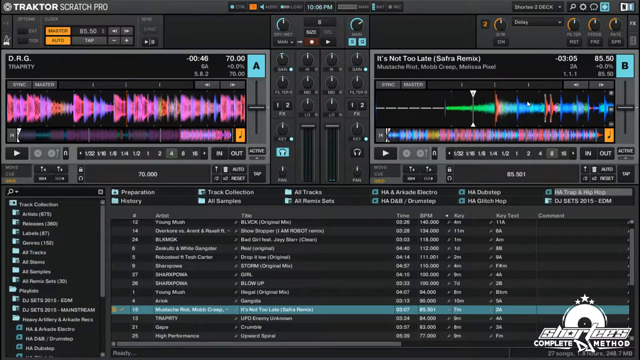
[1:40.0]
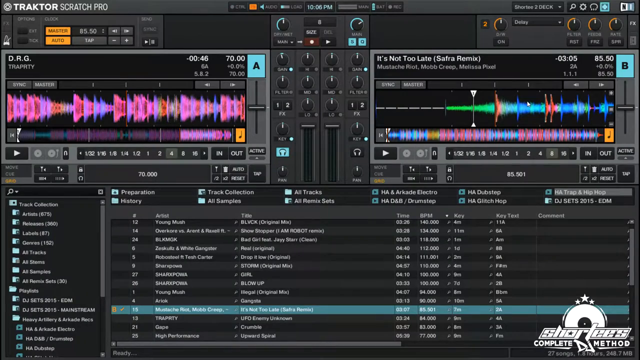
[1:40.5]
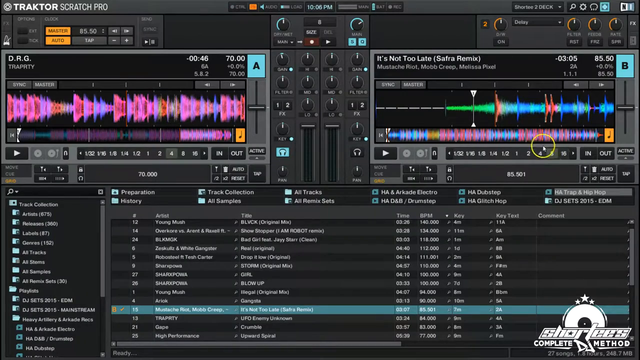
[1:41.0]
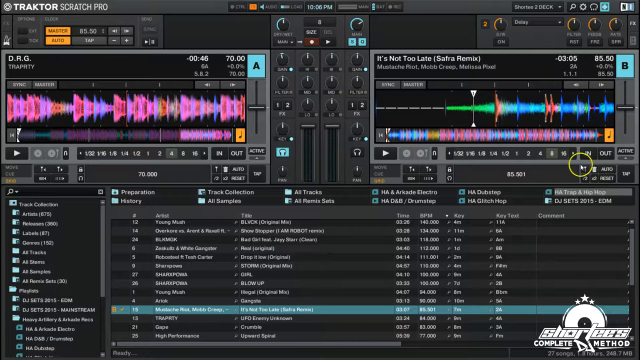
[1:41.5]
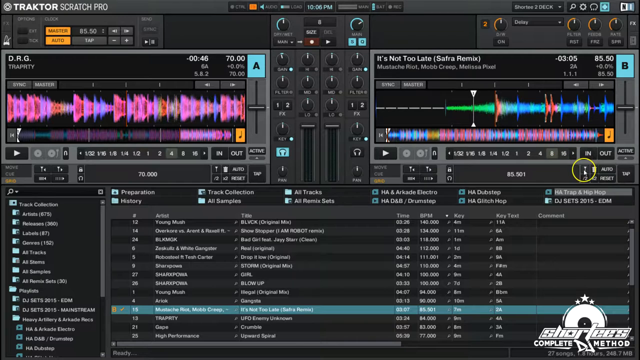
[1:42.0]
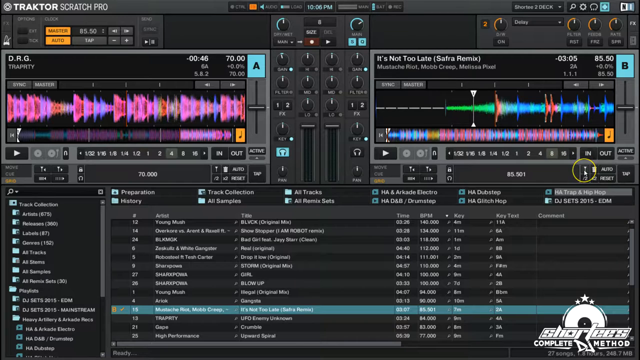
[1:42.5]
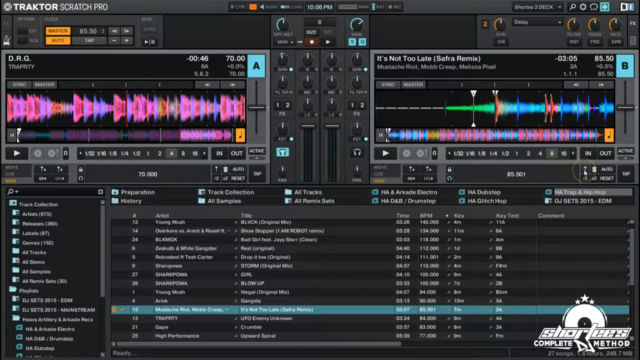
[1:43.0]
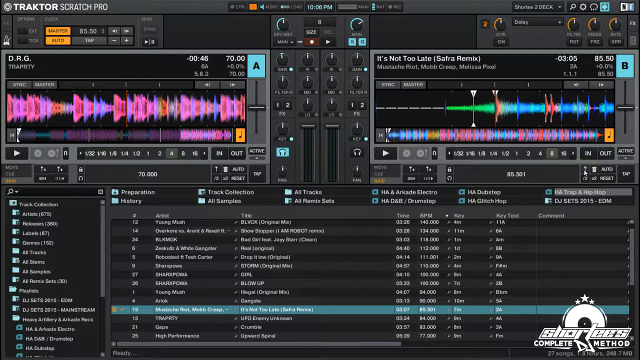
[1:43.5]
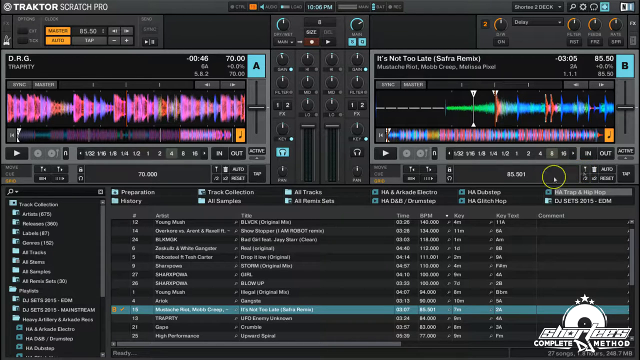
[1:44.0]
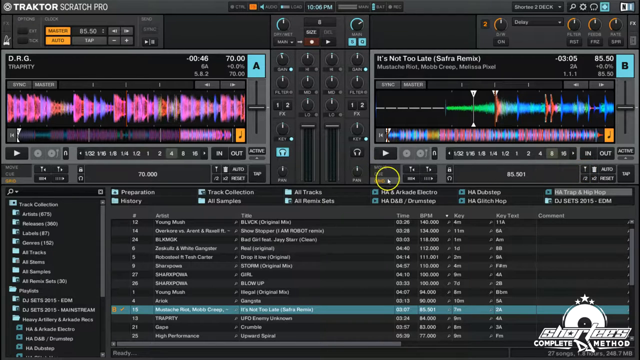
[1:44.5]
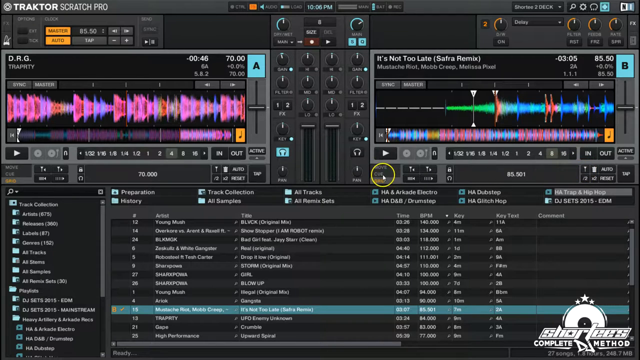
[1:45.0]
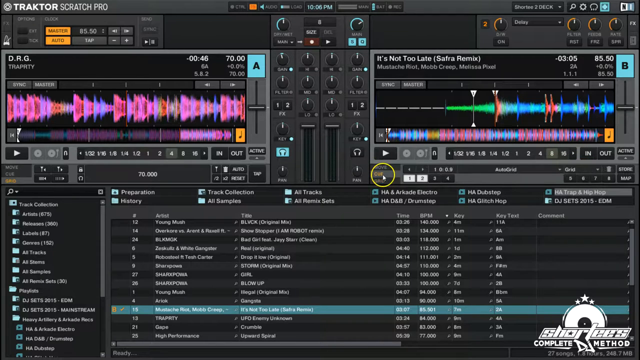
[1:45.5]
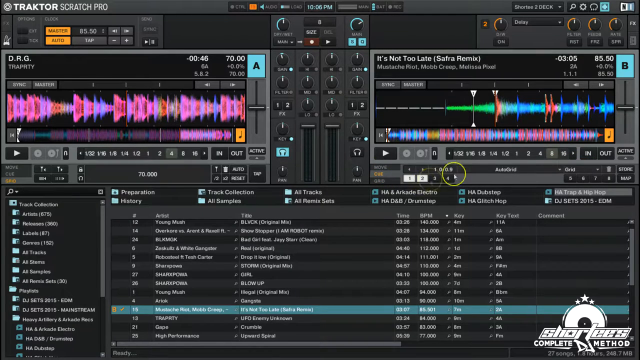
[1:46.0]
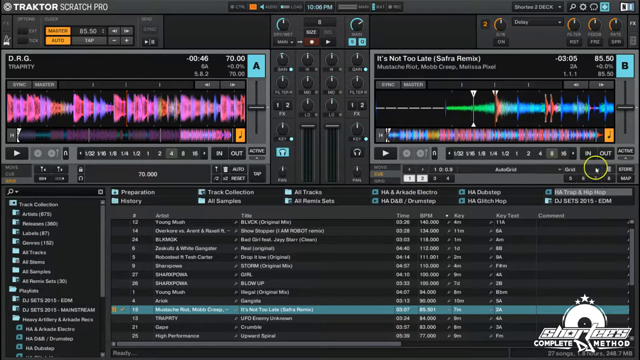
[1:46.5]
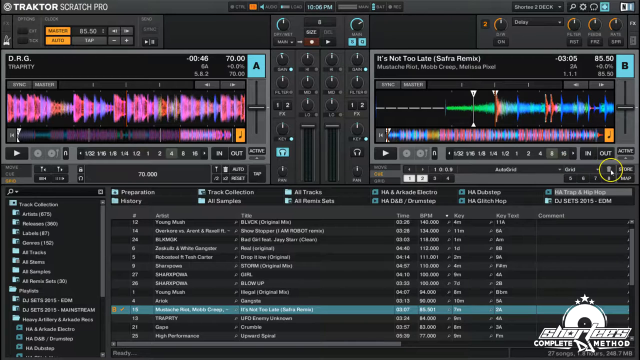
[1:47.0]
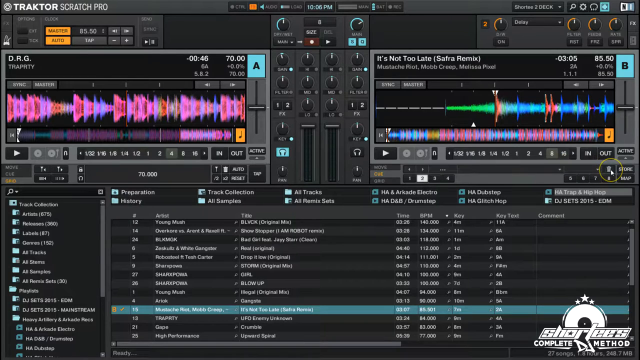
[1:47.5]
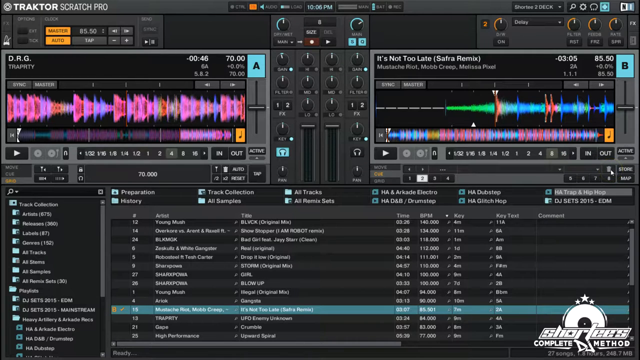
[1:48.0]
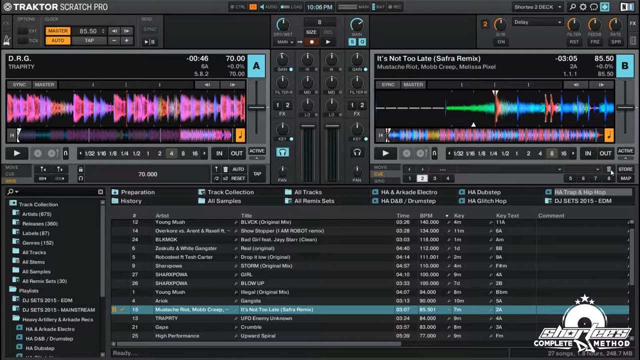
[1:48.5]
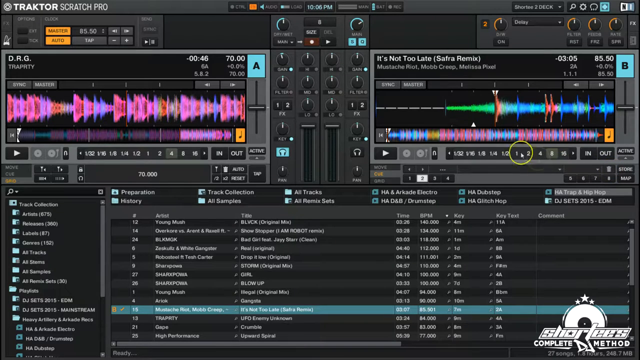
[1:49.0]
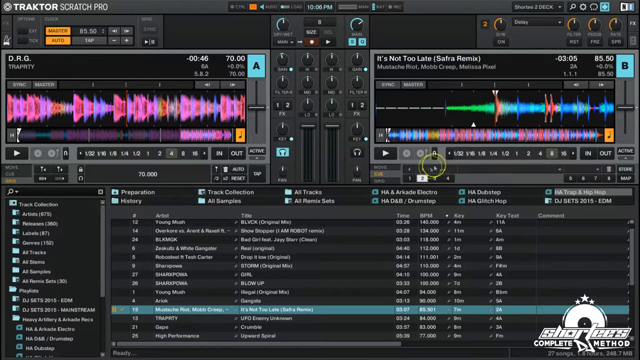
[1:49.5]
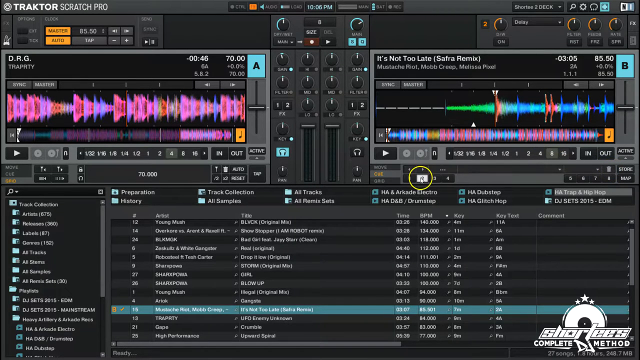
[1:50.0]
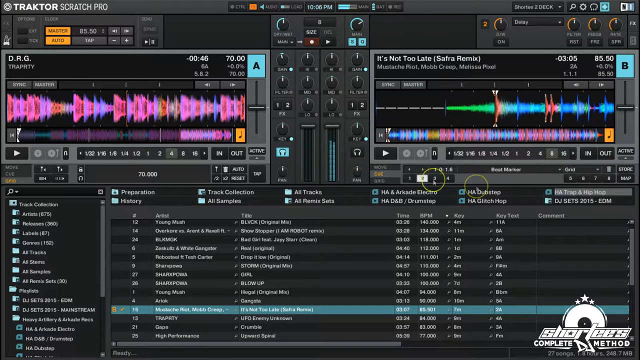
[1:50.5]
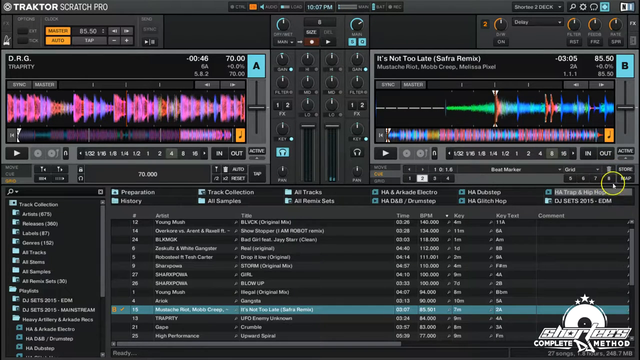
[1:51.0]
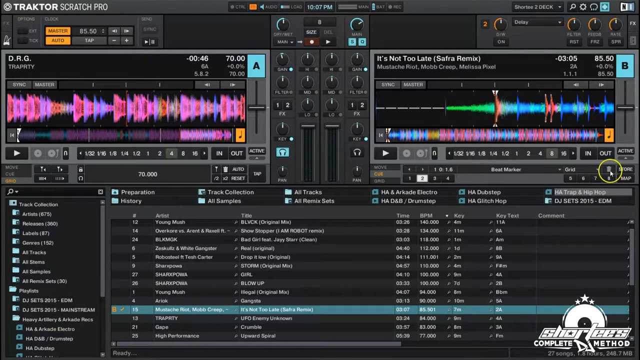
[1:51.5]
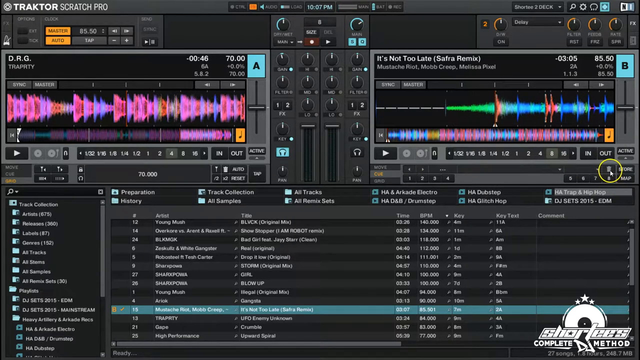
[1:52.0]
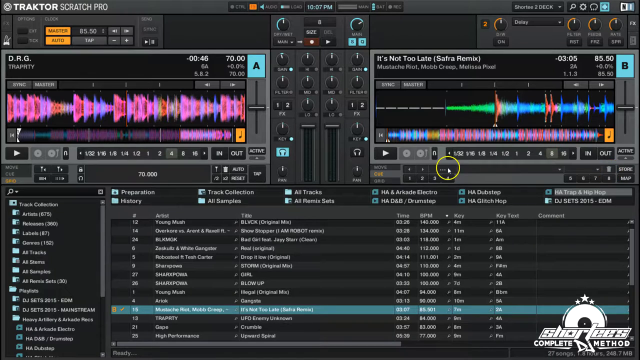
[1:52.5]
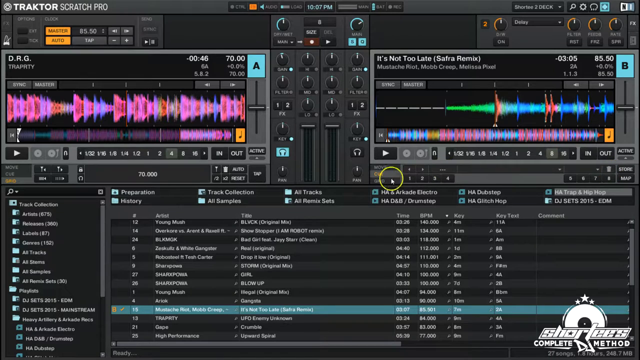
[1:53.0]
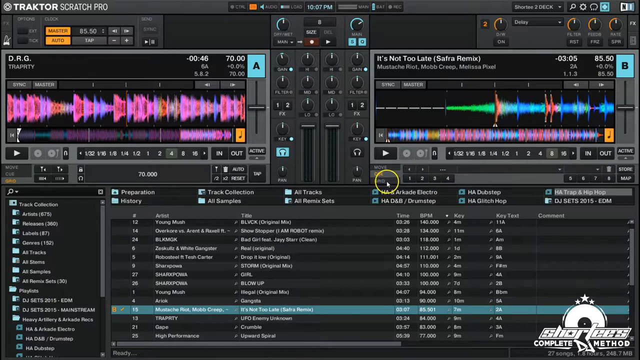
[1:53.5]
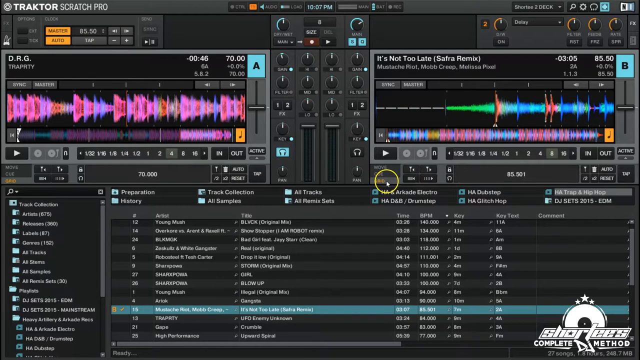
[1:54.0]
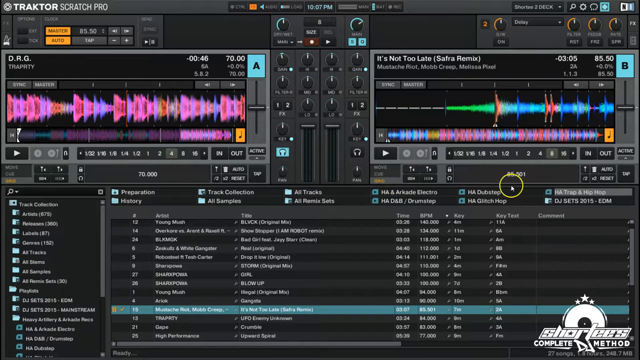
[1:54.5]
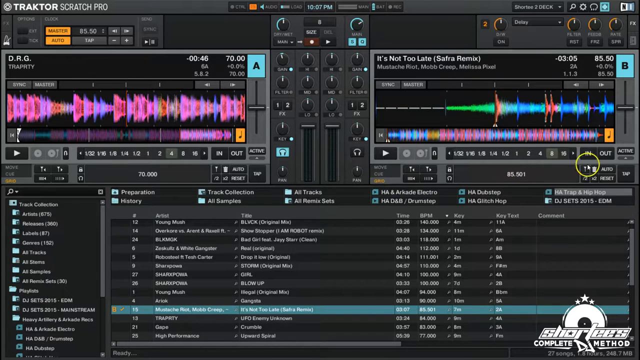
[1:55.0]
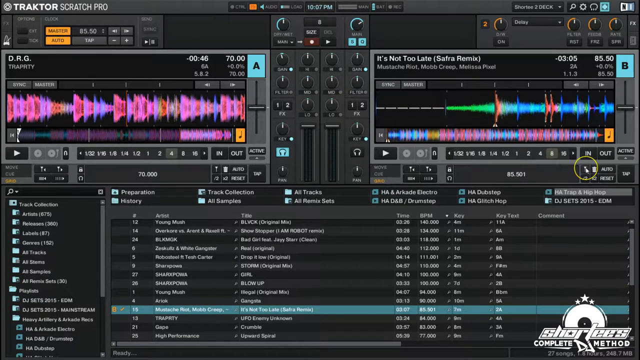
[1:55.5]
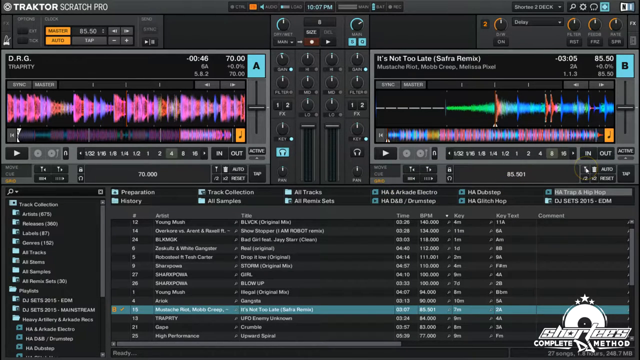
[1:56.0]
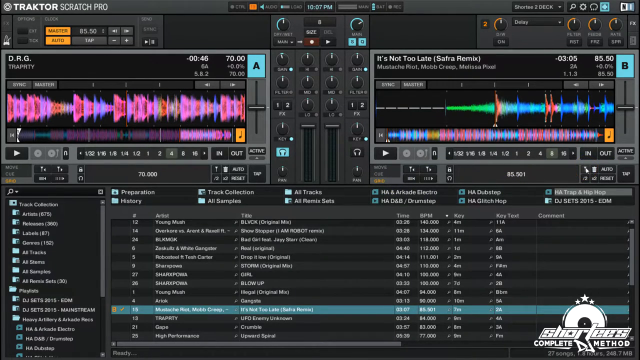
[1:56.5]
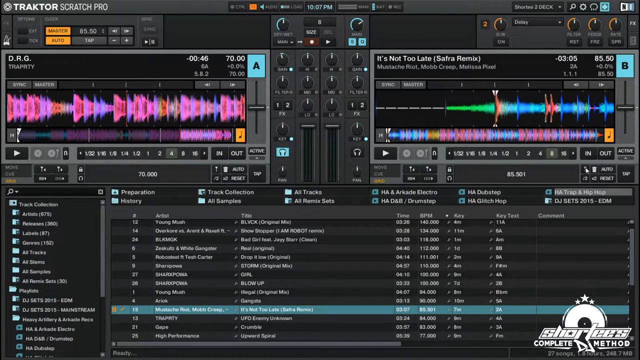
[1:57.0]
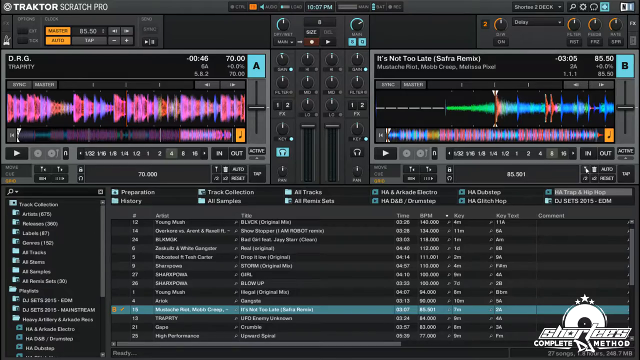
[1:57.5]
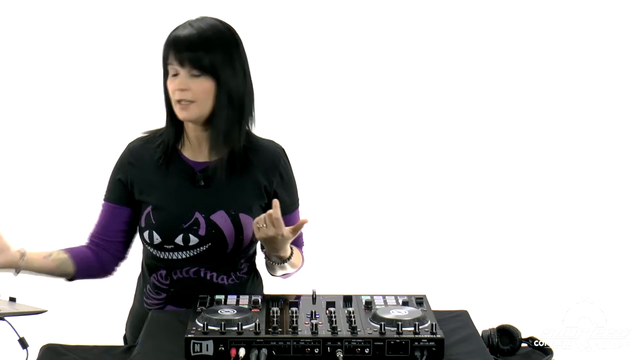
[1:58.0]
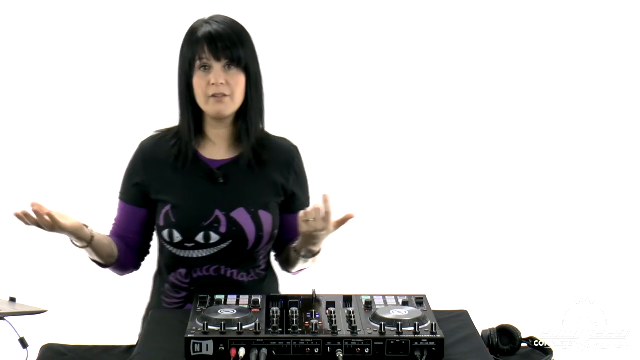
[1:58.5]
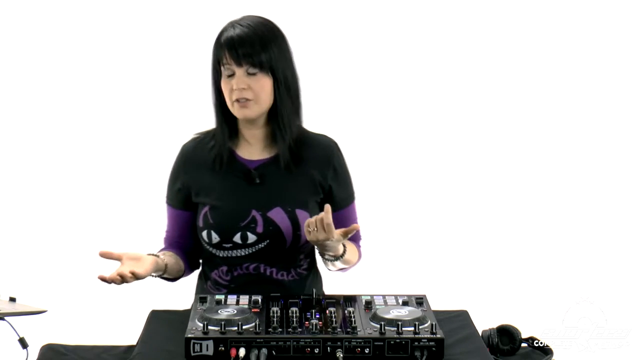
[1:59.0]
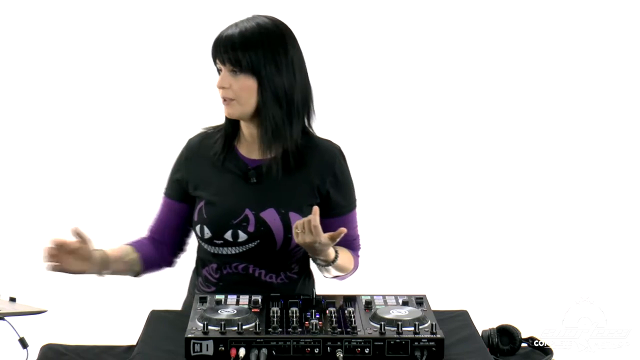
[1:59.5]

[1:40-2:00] The electronic synthesizer or mixing board, "Traktor Scratch Pro," remains on screen, with much to see and some text too small to read. In the middle are a "preparation" button and the items "history," "track collection," "all samples," "all tracks," "all previous sets," "Arcade Electra," "drum stop," "dub stop" and "glitch hop." Above them, on either side, are two boxes with various colors pointing from left to right, probably indicating the sound frequency, pitch and tone.